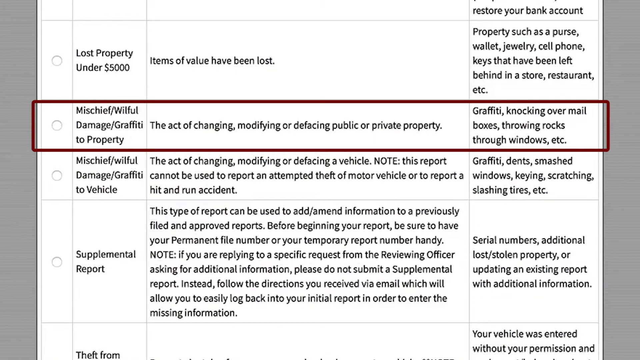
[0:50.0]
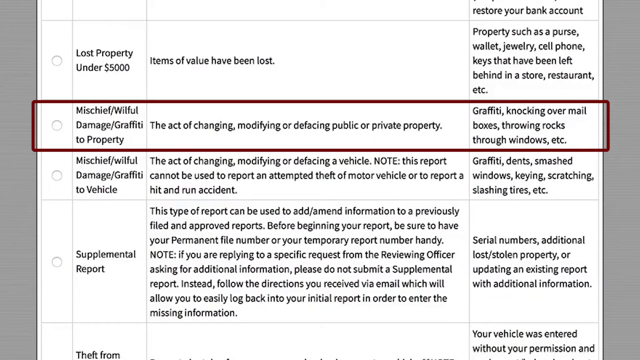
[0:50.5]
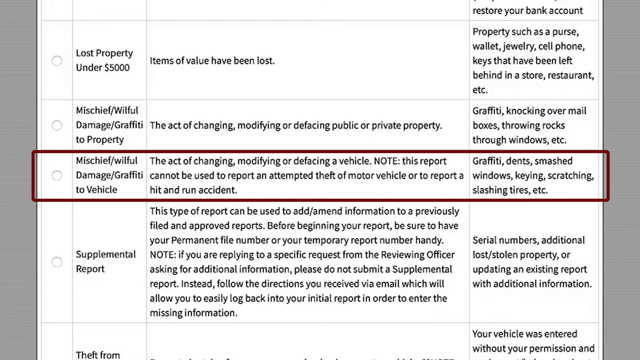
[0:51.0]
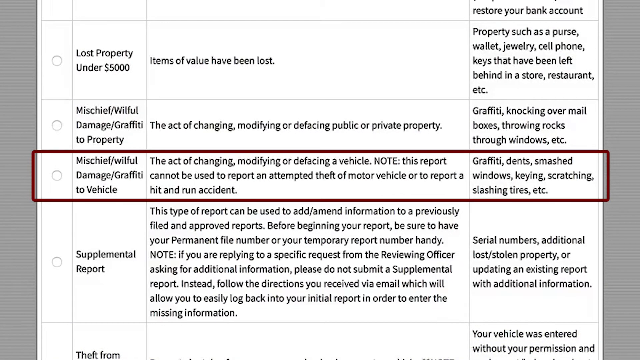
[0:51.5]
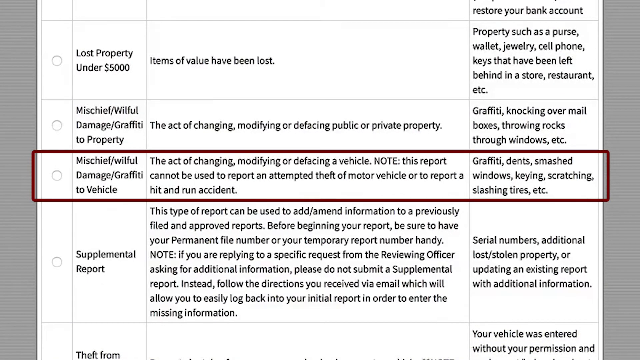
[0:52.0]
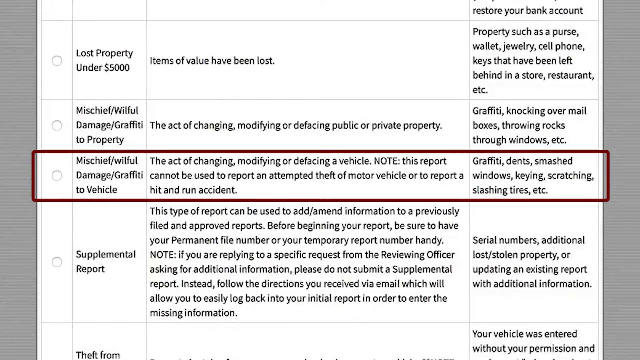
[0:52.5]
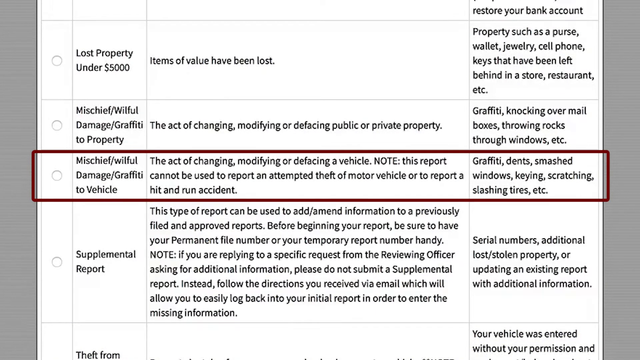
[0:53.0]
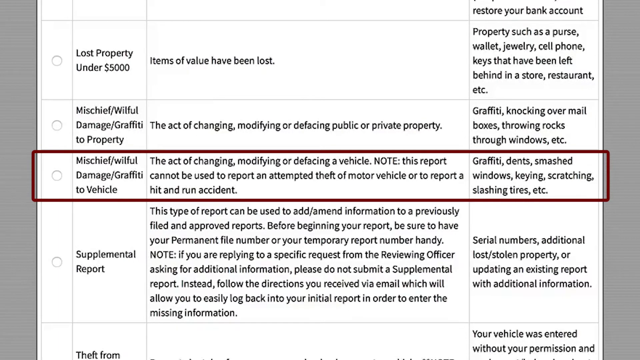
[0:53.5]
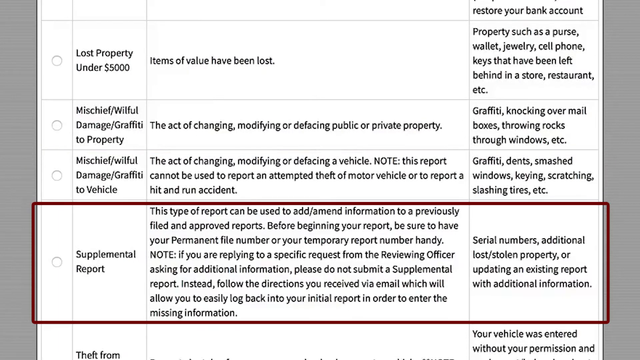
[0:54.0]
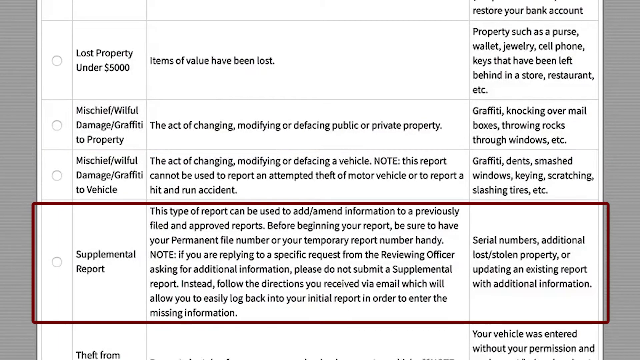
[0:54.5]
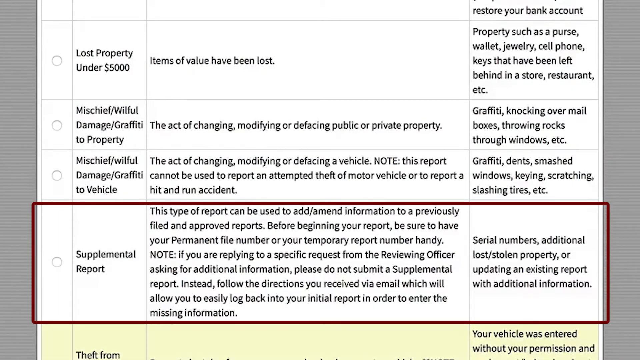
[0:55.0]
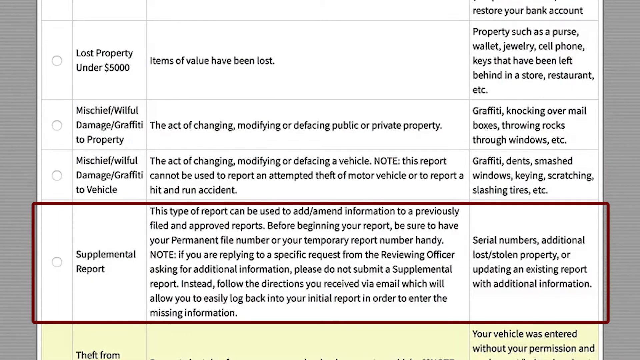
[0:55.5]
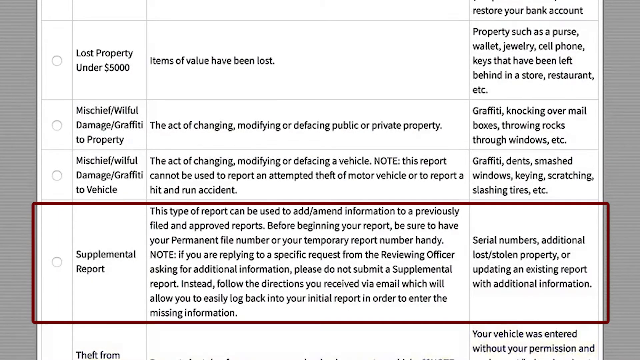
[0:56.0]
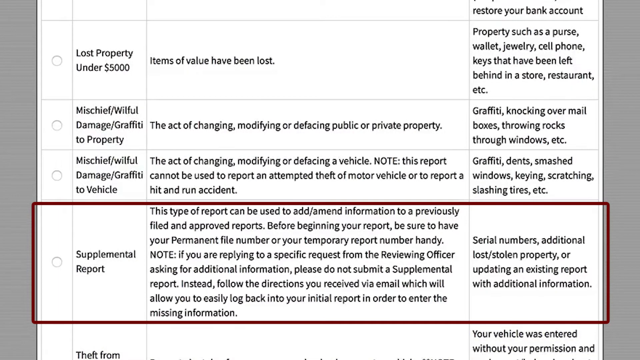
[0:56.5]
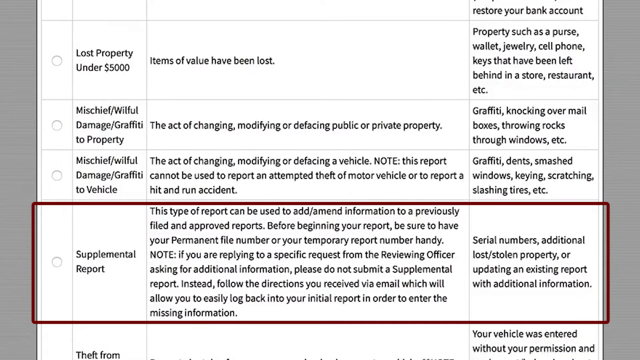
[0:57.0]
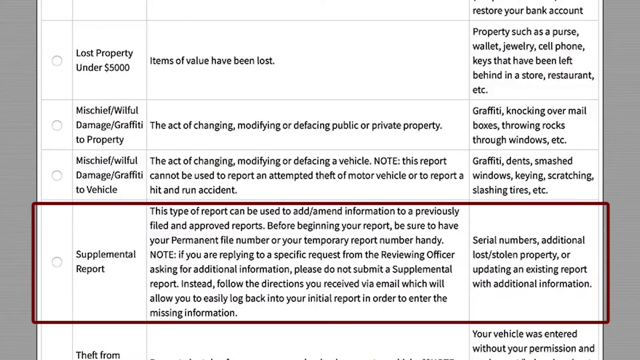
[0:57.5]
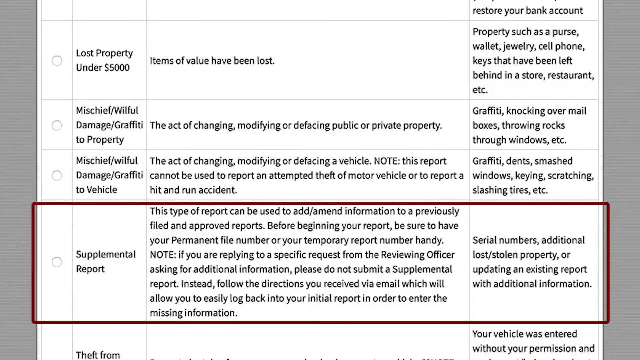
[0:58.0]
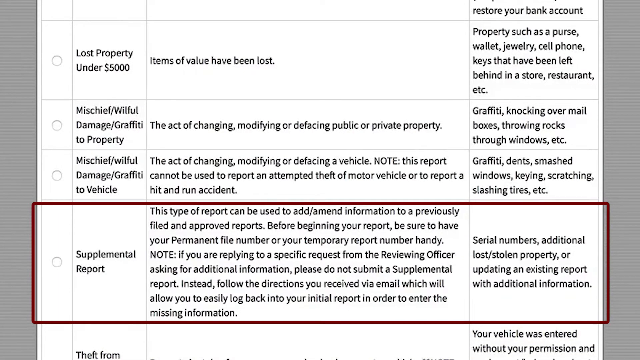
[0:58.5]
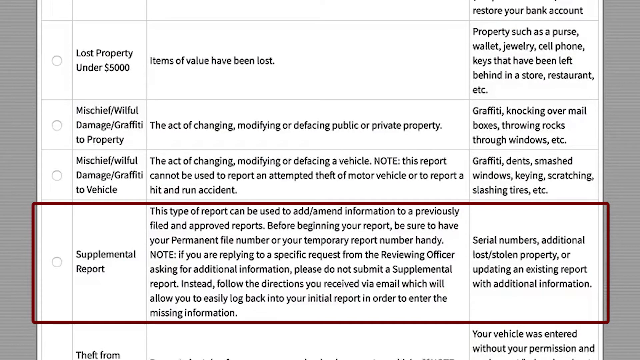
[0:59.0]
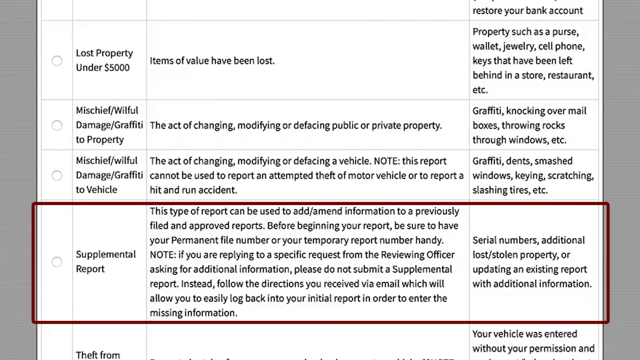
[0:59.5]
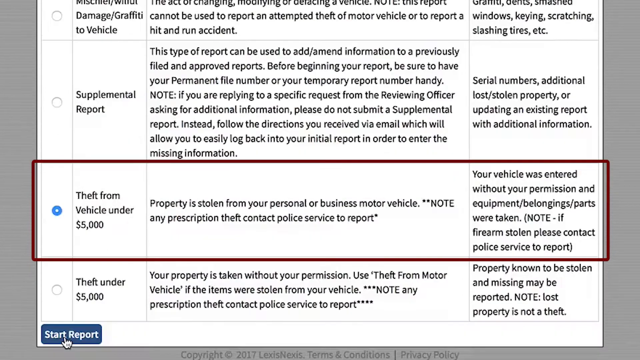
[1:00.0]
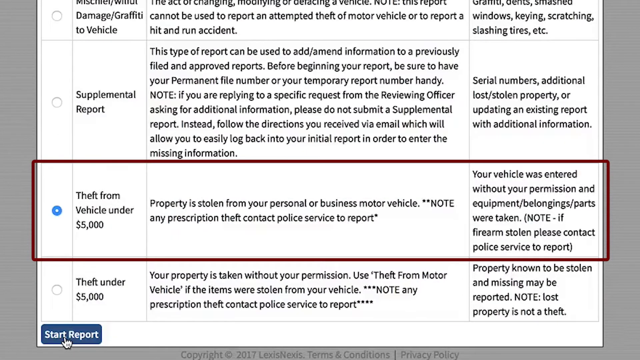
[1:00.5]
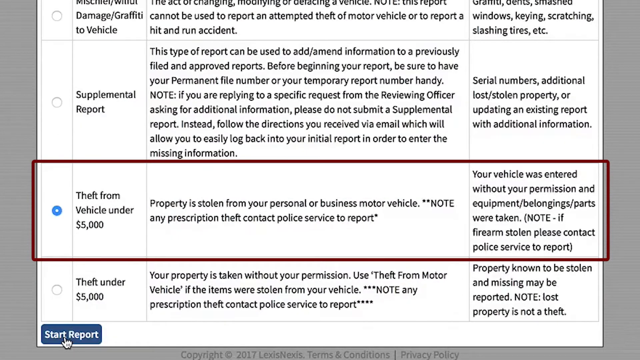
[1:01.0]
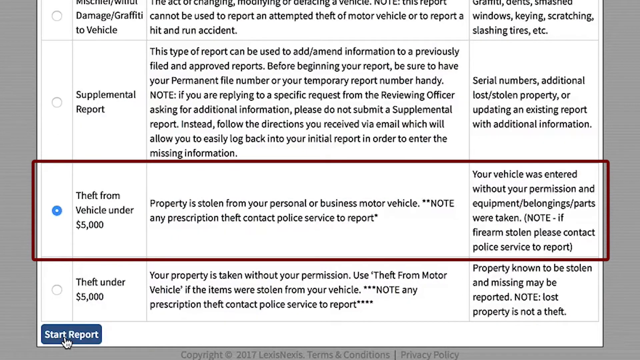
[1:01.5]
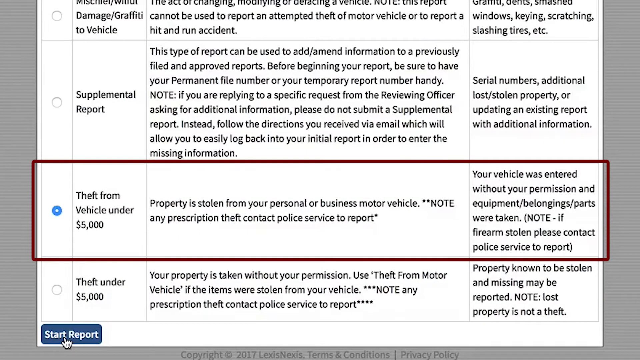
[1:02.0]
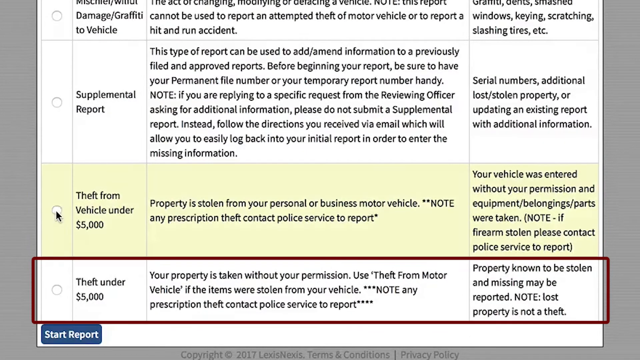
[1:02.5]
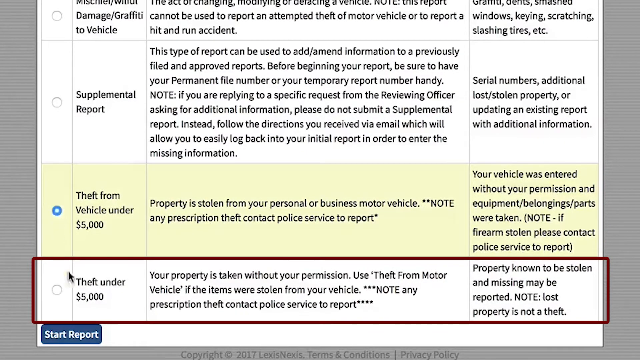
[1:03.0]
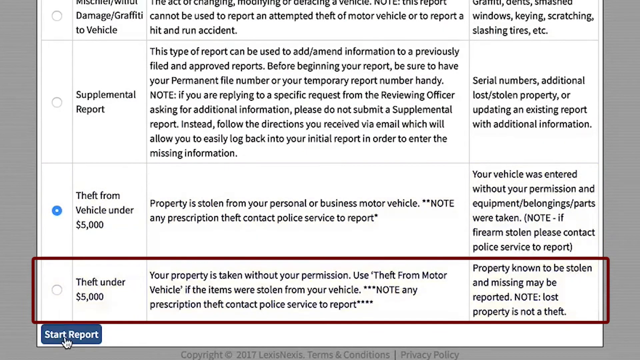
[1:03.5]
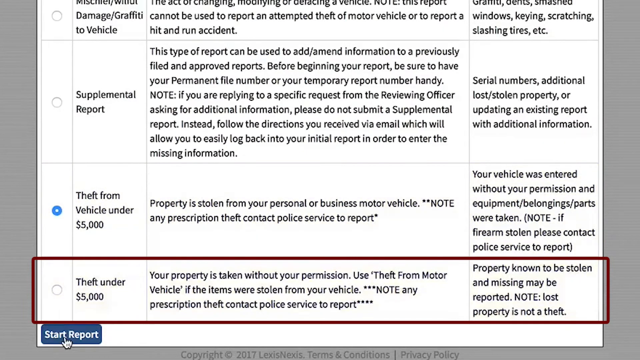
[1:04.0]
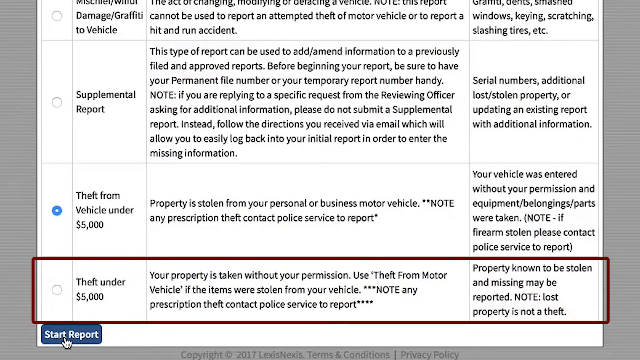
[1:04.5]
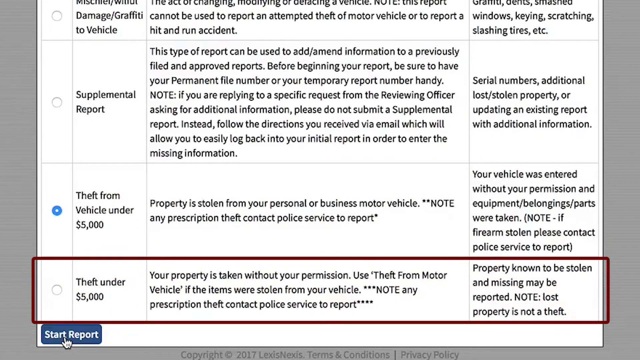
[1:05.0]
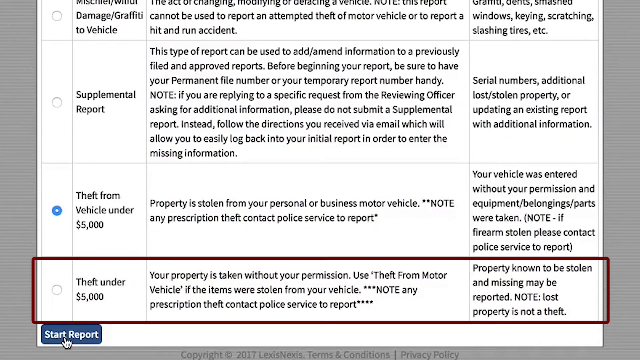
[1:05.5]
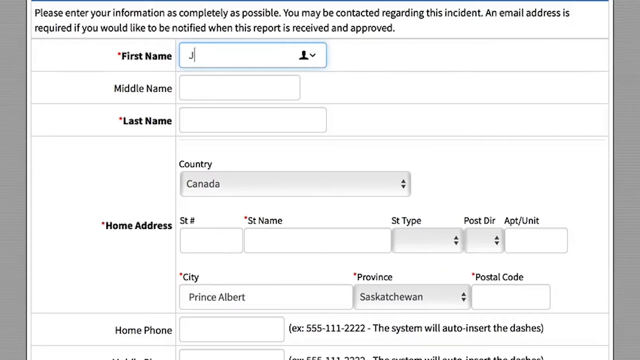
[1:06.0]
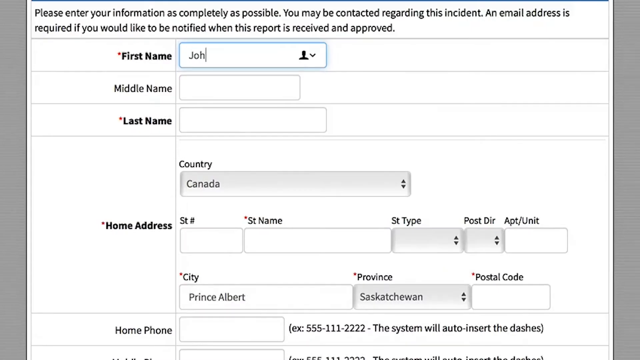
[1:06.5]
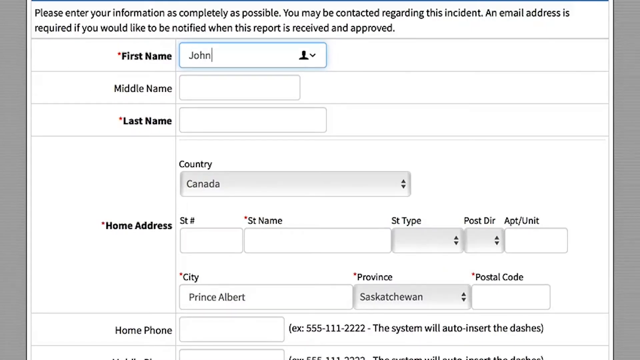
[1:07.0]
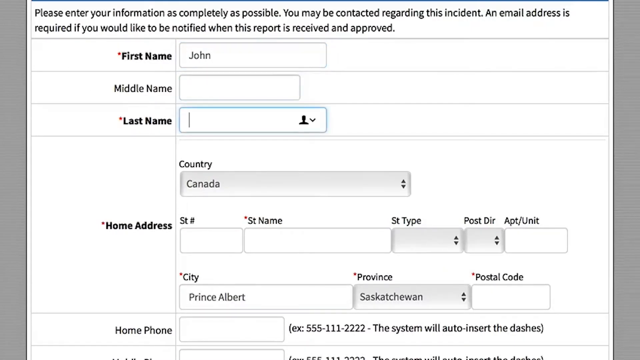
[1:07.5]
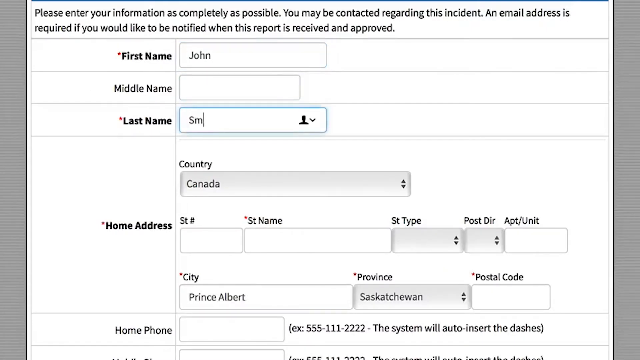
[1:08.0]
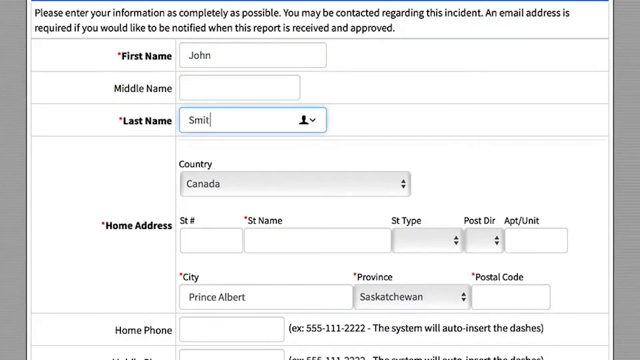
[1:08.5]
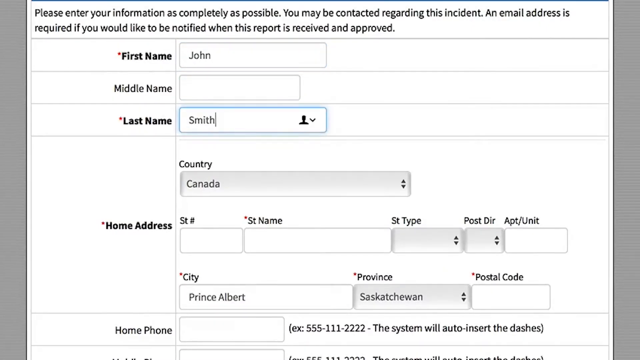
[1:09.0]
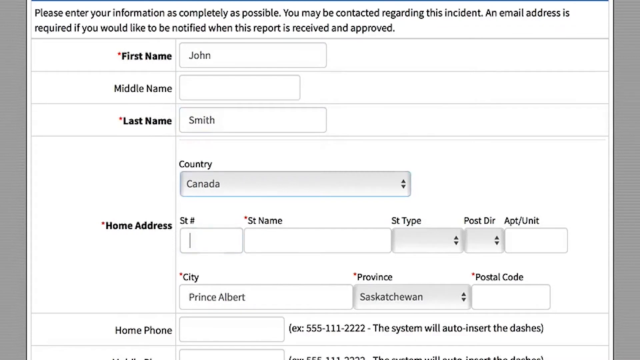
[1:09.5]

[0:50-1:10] Examples of the types of crime that can be reported online are listed. One is fraudulent scam, with an example message: "It has come to our attention that your online banking profile needs to be updated. As part of our continuous effort to protect your account and reduce instances of fraud, your online account with access to your account is currently unavailable." Another is loss of property under 5,000, where items of value have been lost, for example a purse, wallet, jewelry, cell phone or keys left behind in a store, restaurant, etc. Another is mischief or willful damage of property: "the act of changing or modifying or defacing public or private property."